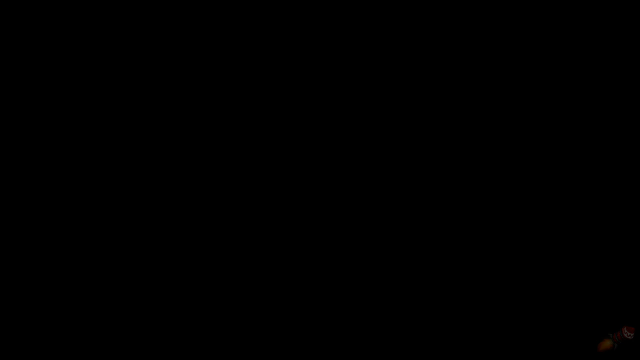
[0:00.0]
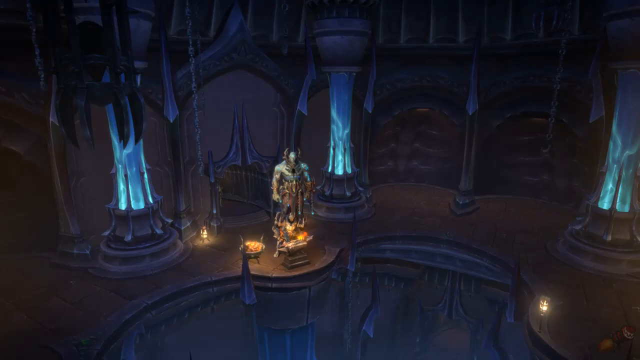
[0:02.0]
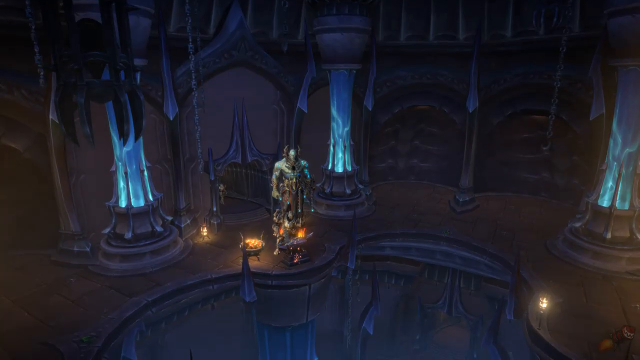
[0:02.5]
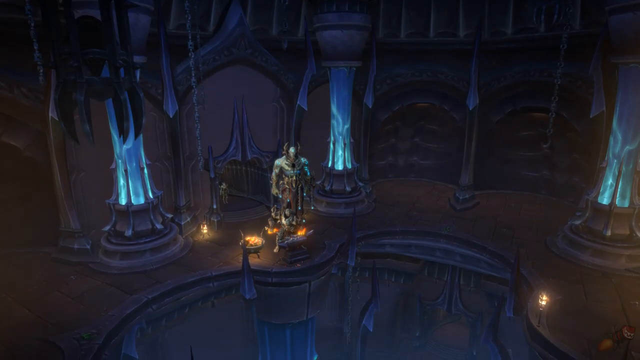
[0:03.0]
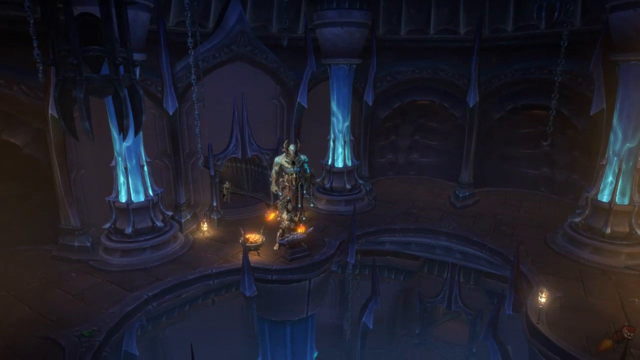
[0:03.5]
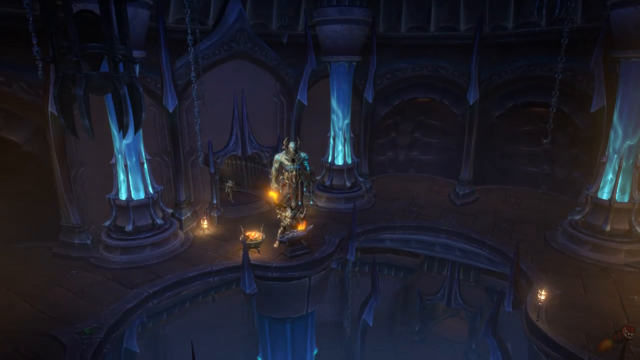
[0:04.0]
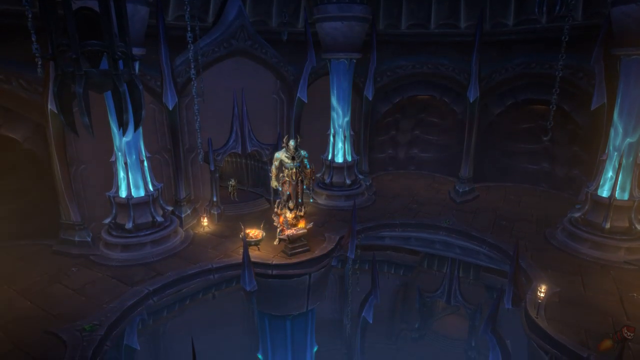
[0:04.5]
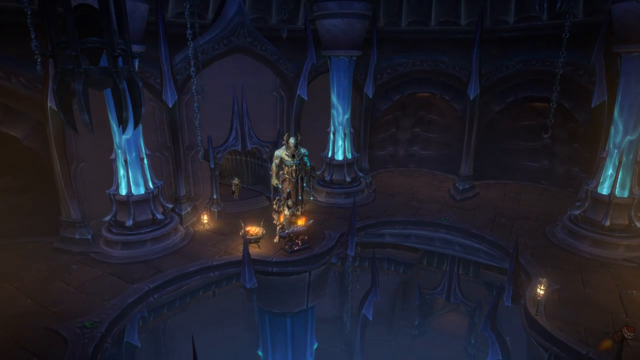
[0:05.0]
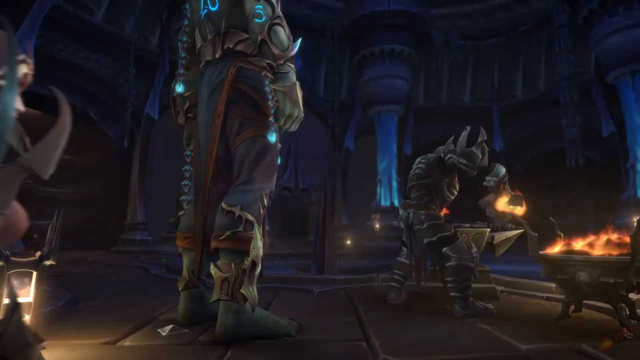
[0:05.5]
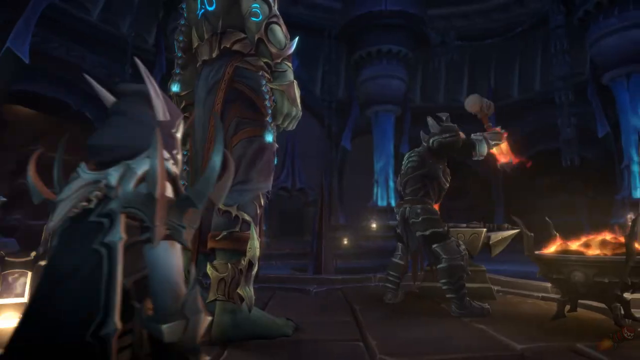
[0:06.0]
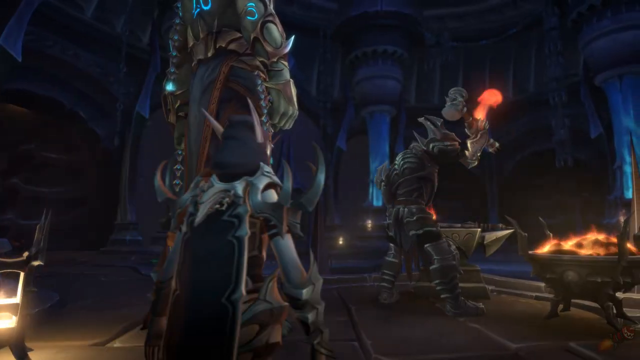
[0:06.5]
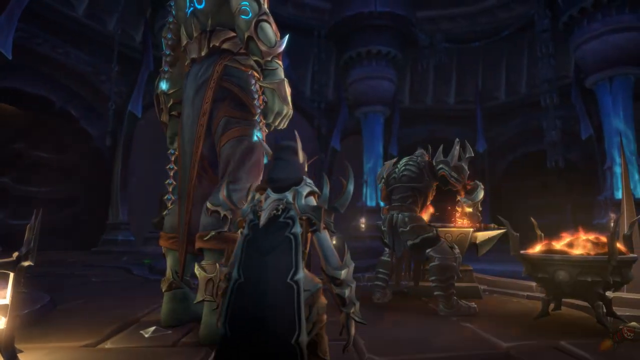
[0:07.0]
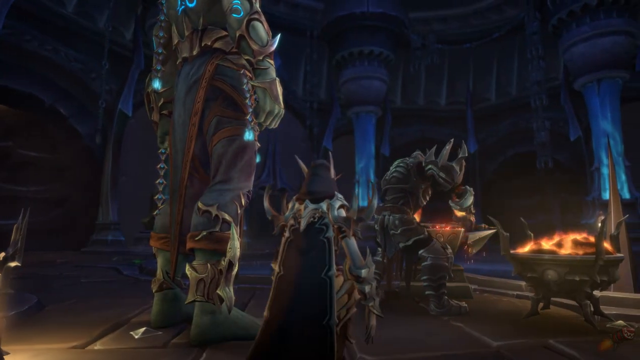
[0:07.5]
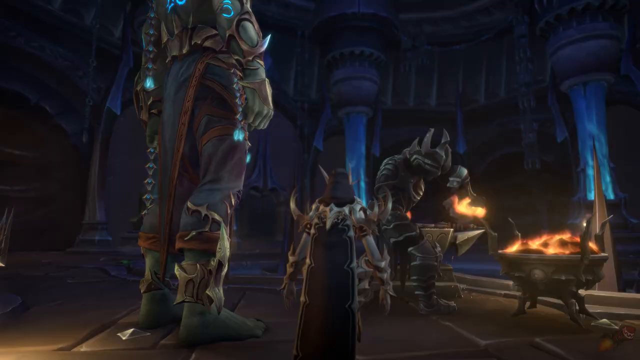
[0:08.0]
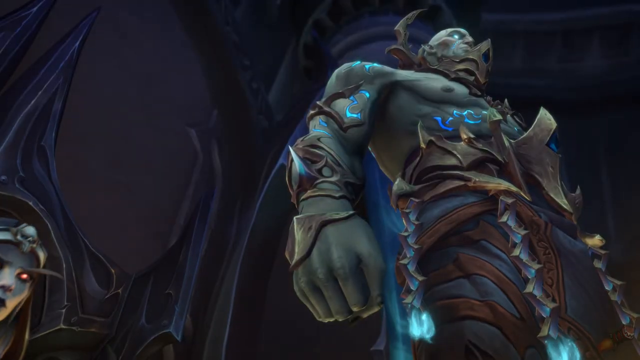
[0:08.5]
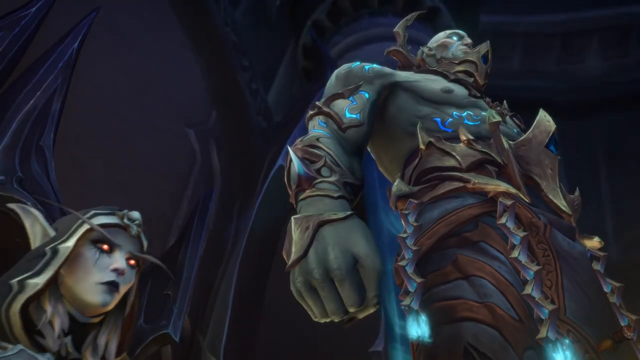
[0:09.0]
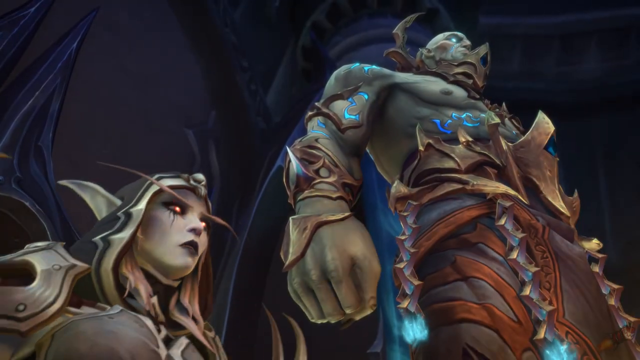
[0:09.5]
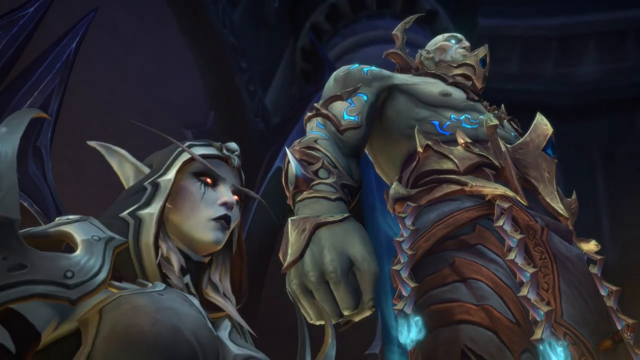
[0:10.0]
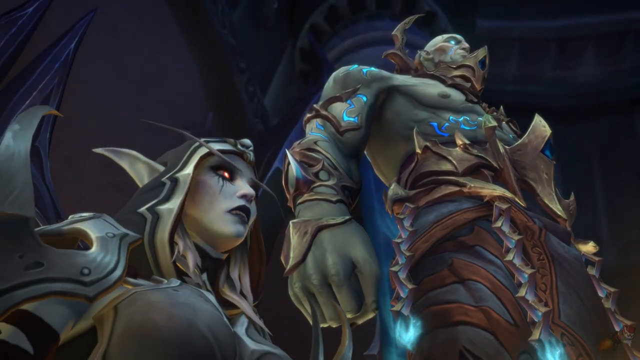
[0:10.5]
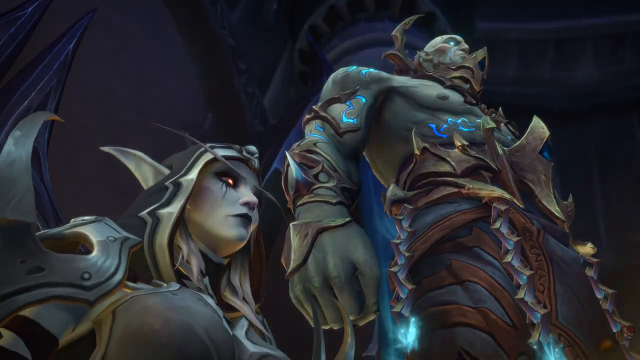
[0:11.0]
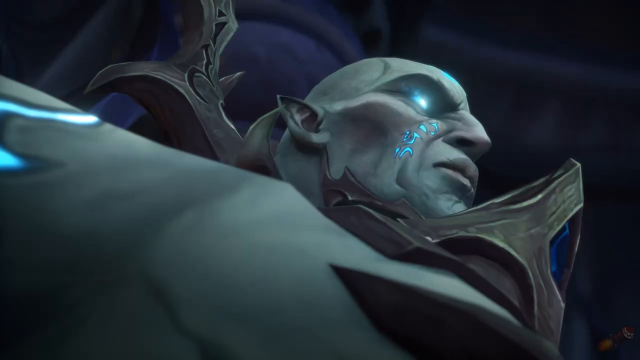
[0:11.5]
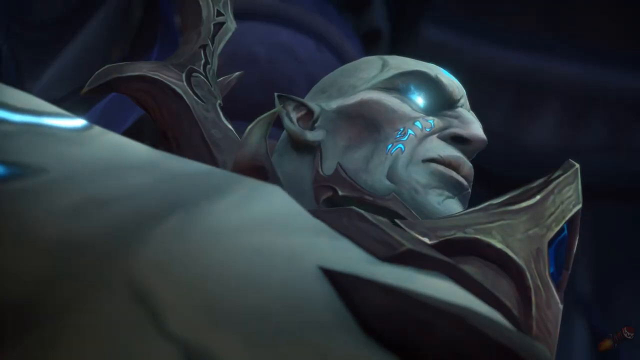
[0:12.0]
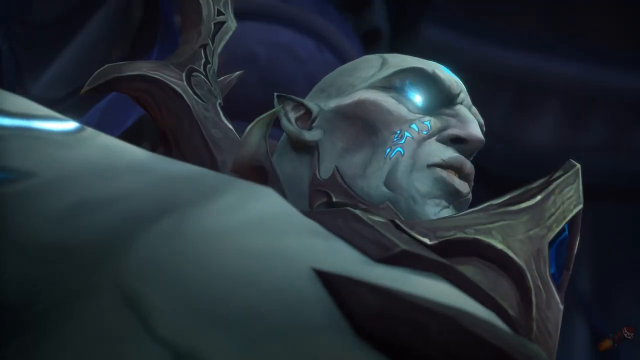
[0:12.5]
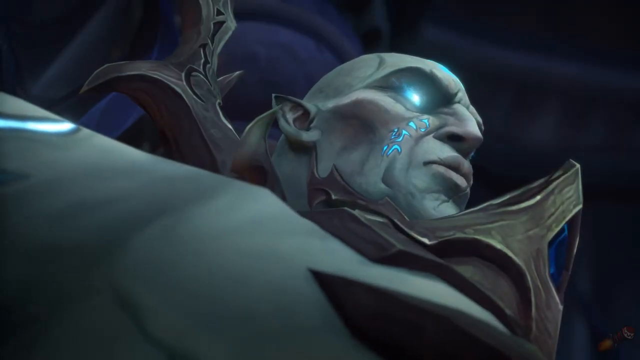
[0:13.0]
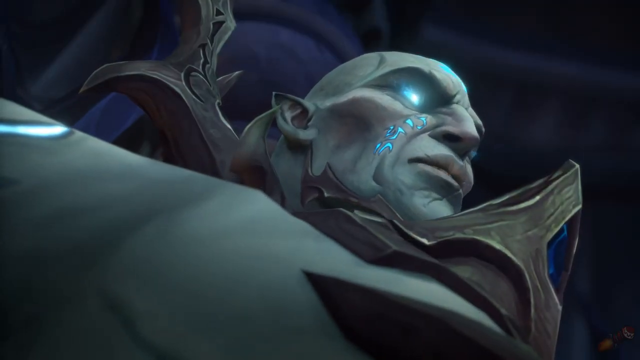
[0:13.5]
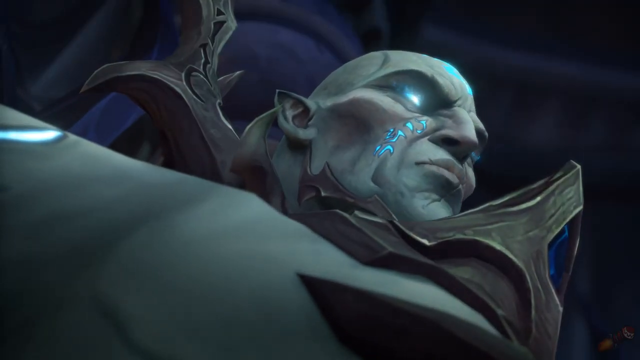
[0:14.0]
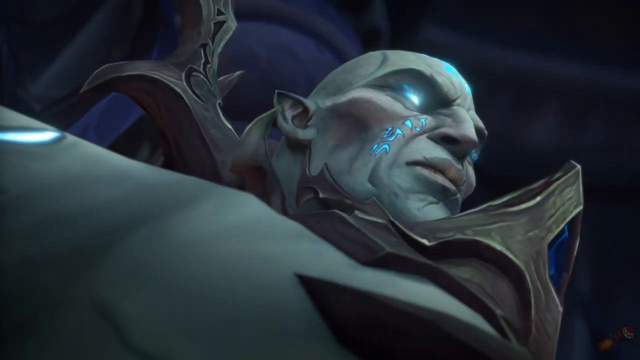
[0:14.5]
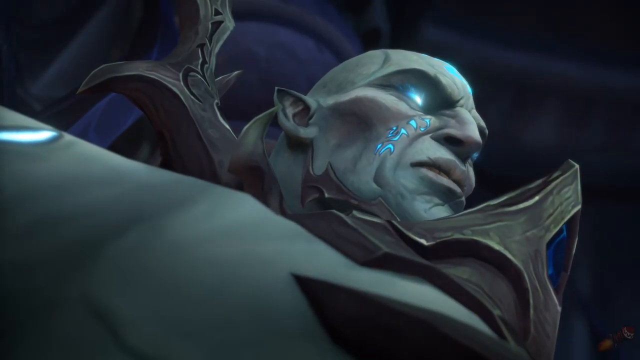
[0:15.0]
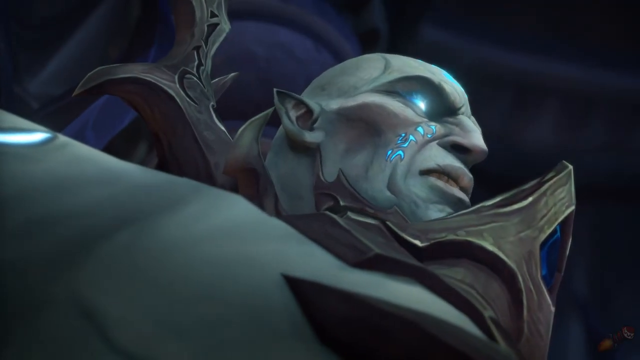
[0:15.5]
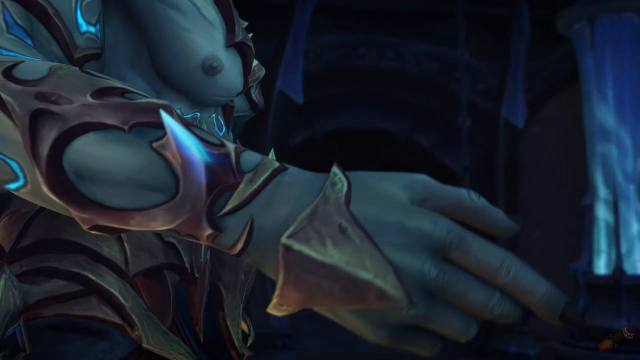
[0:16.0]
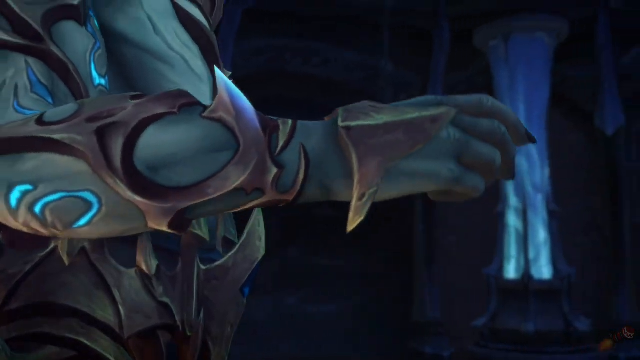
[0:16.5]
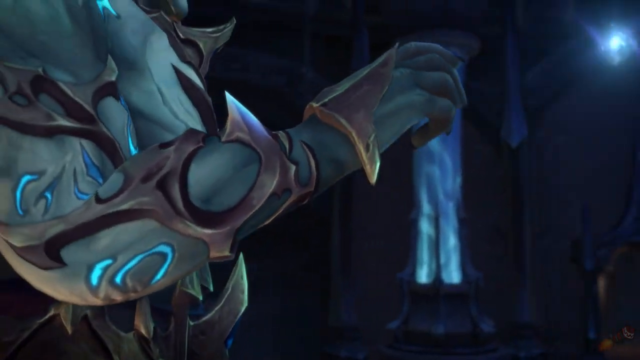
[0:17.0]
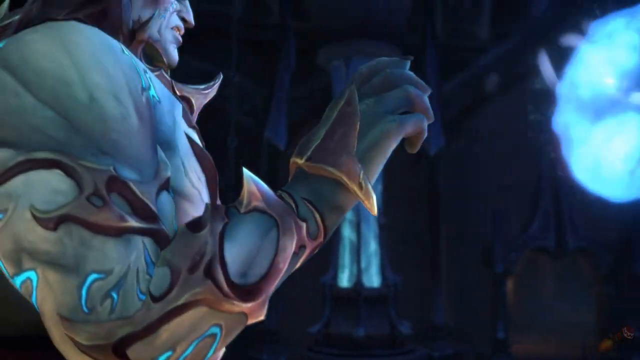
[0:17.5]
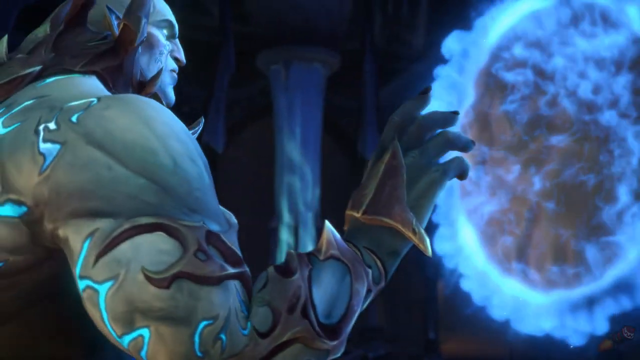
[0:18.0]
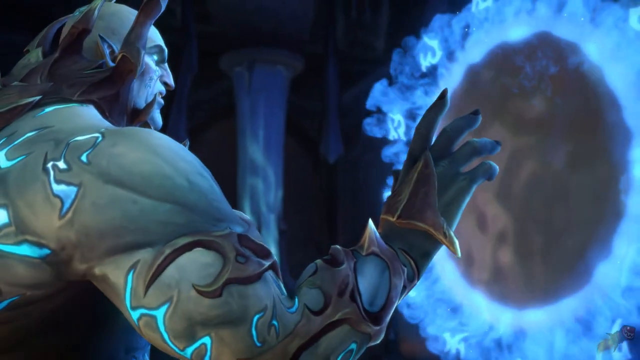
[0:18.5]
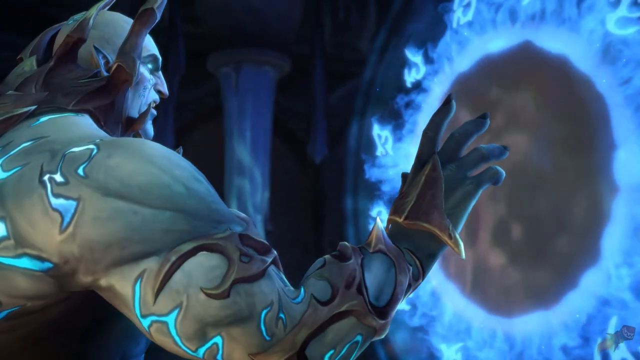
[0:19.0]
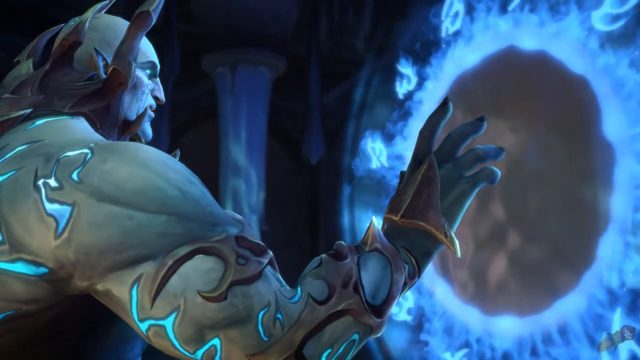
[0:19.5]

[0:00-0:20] A video game with 3D graphics that appear very realistic shows a fight in which humanlike characters are all fighting against each other in a brutal war.